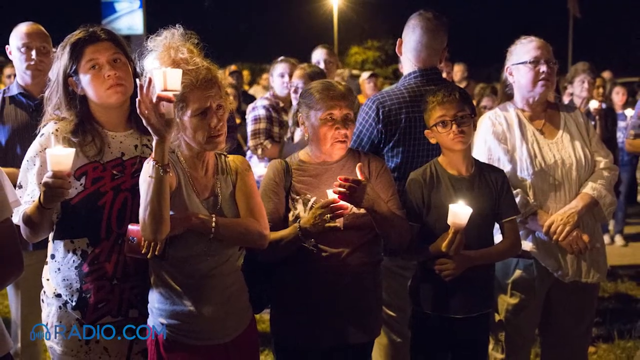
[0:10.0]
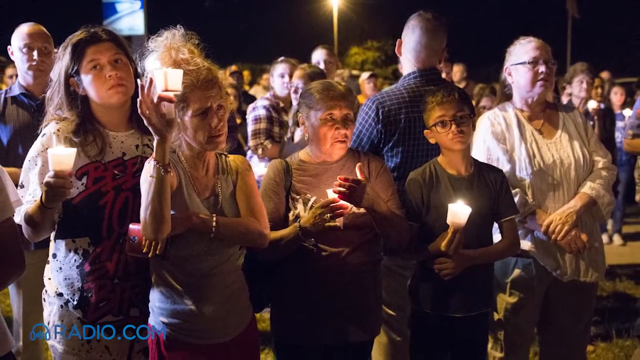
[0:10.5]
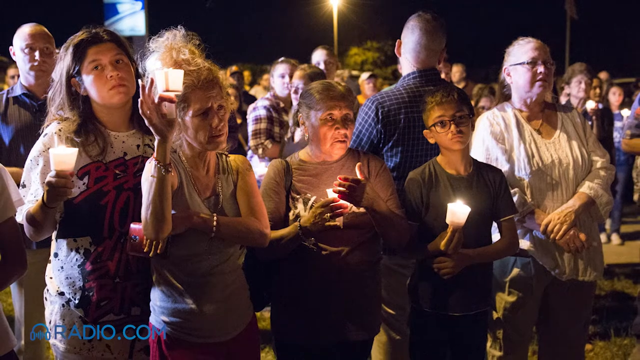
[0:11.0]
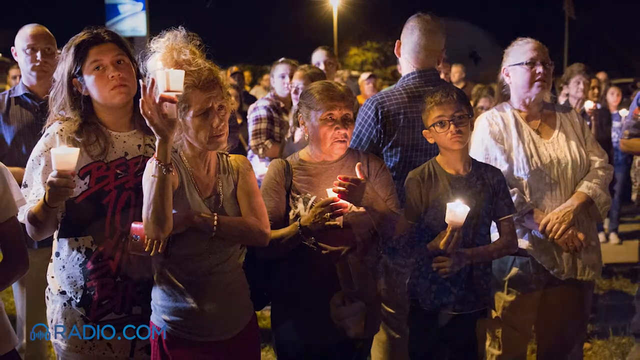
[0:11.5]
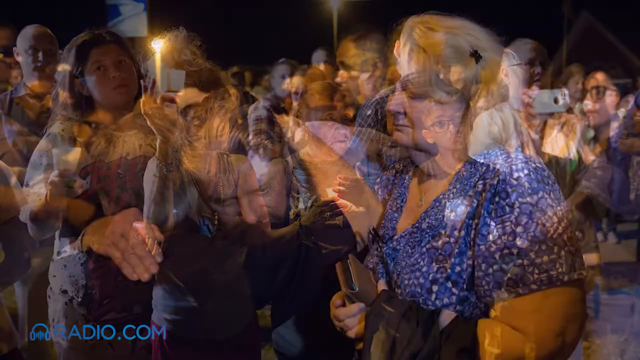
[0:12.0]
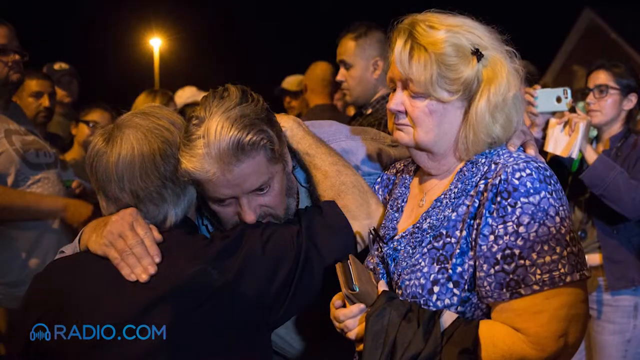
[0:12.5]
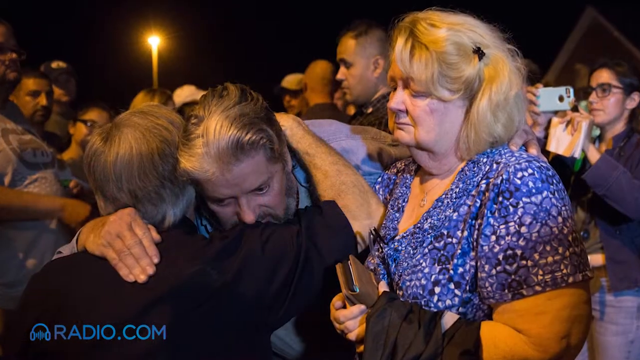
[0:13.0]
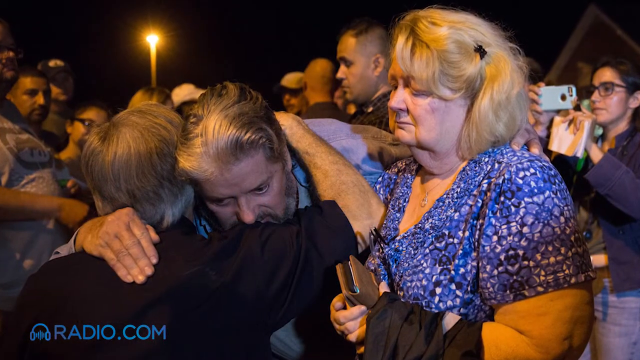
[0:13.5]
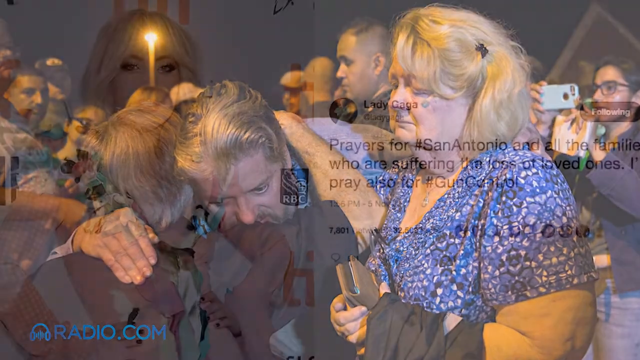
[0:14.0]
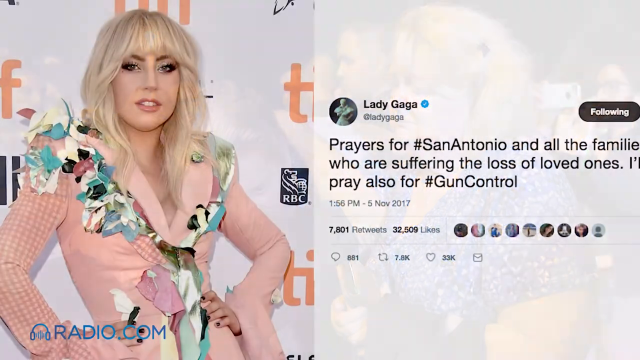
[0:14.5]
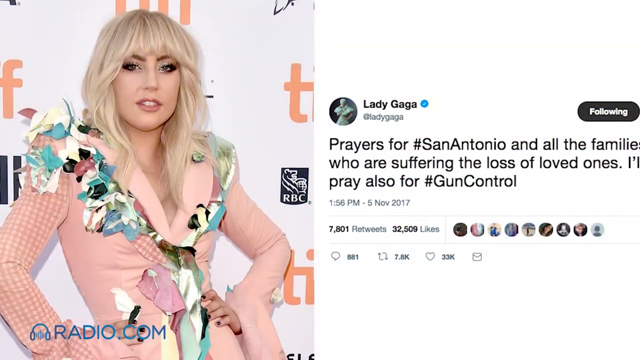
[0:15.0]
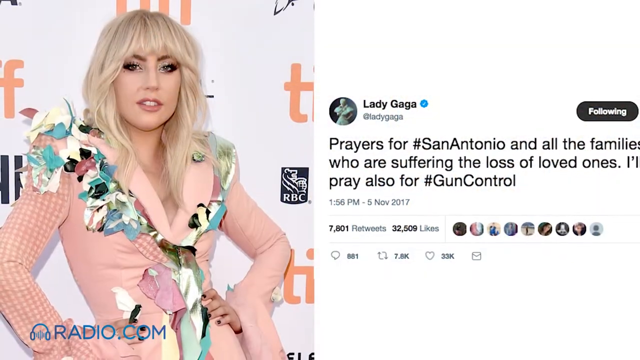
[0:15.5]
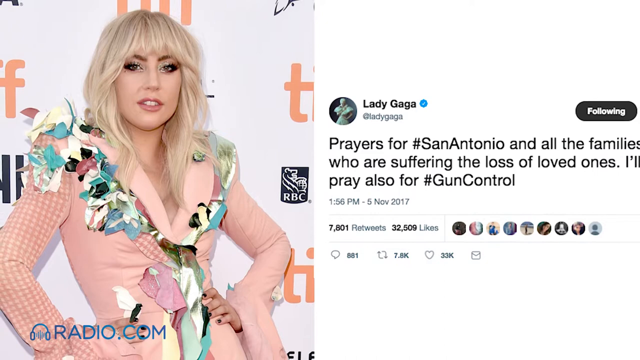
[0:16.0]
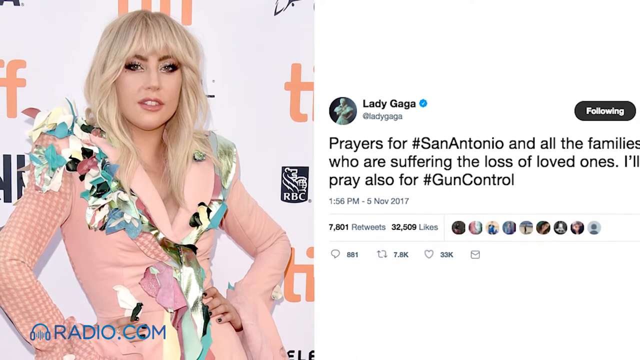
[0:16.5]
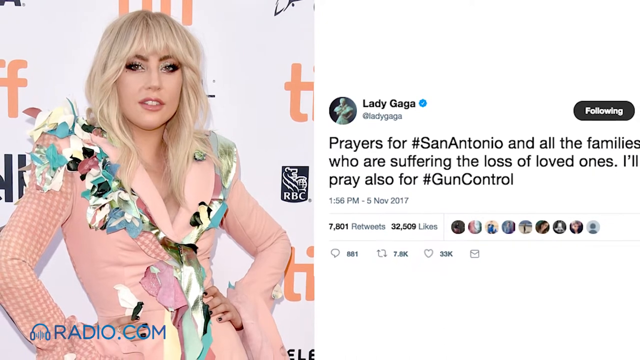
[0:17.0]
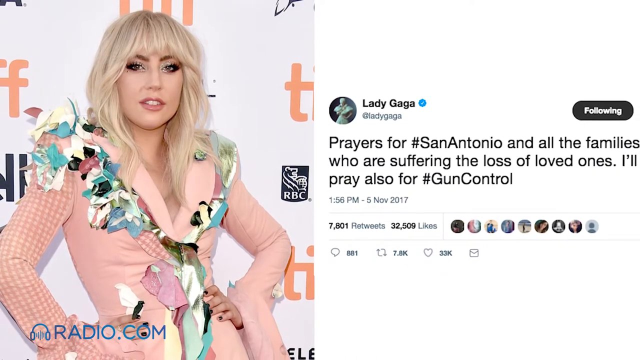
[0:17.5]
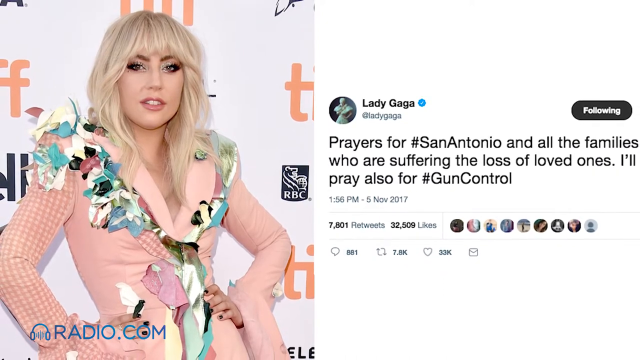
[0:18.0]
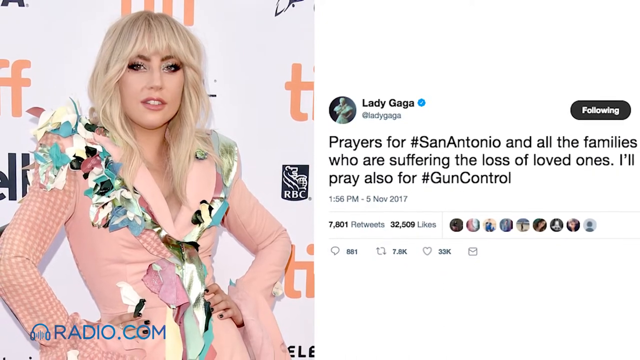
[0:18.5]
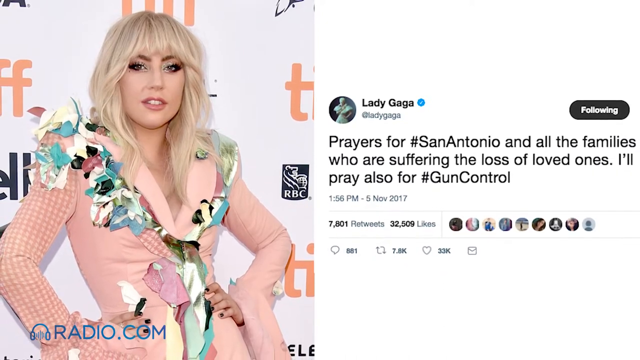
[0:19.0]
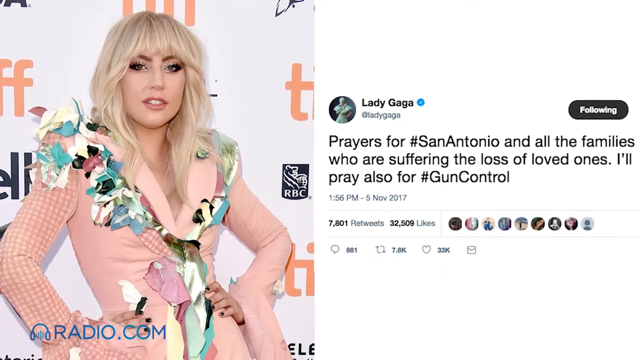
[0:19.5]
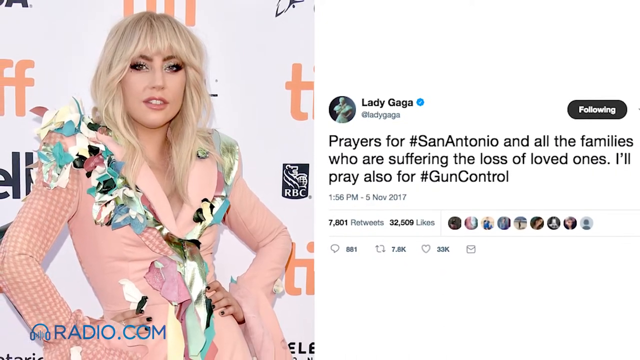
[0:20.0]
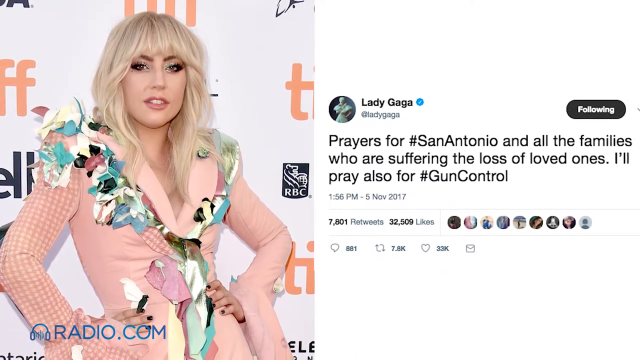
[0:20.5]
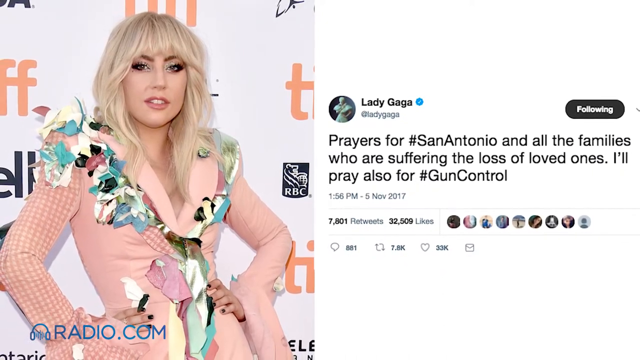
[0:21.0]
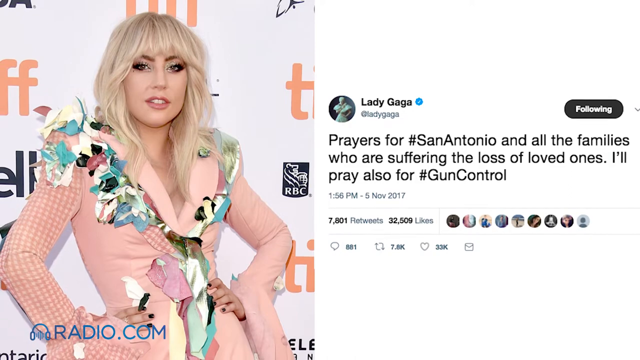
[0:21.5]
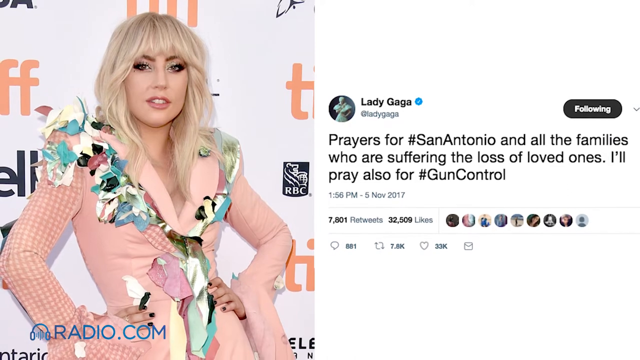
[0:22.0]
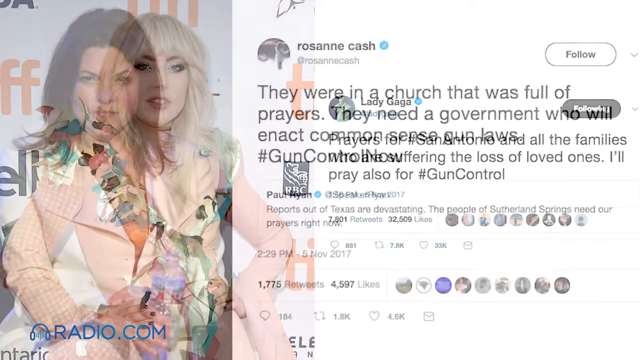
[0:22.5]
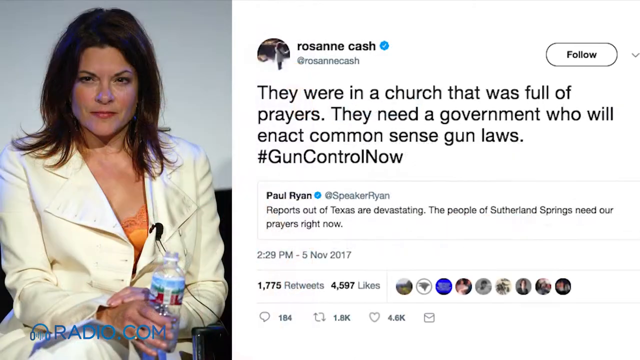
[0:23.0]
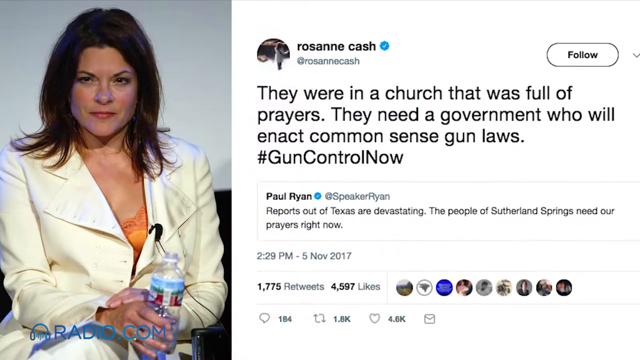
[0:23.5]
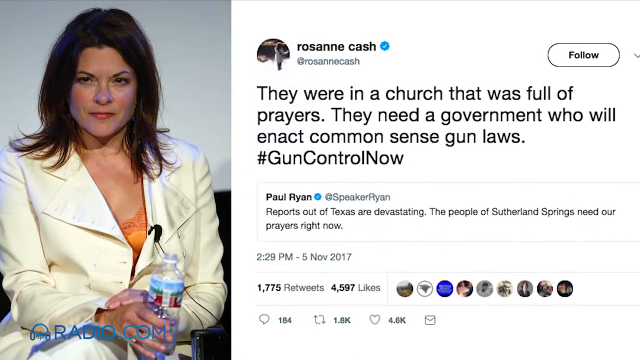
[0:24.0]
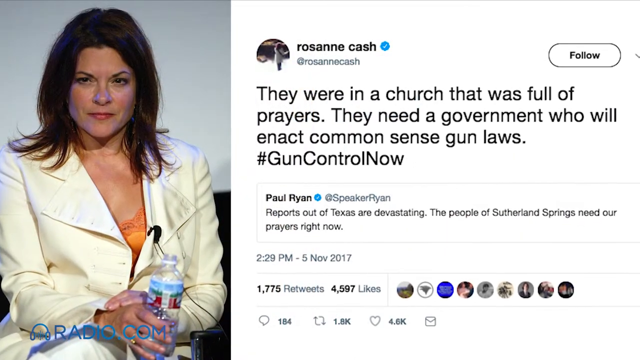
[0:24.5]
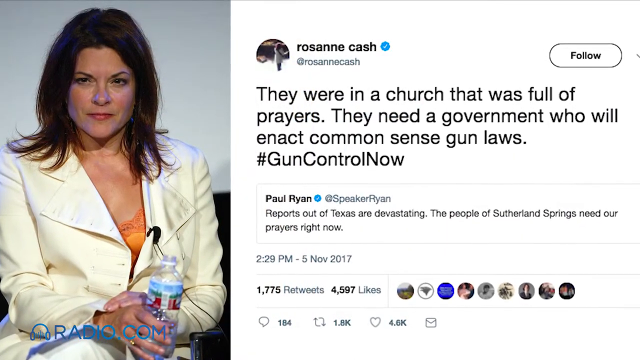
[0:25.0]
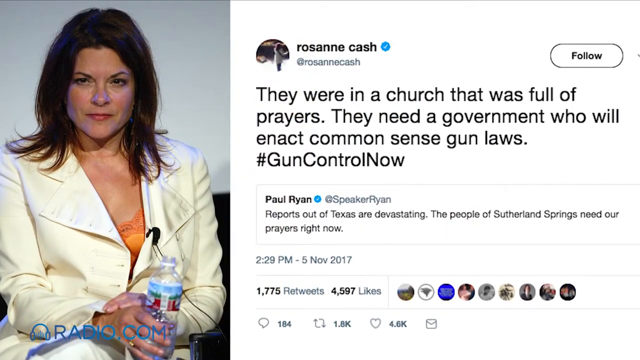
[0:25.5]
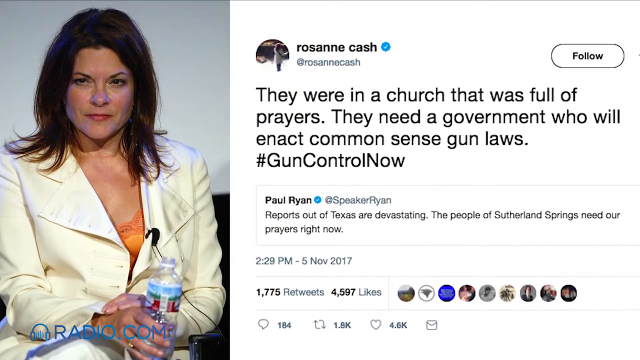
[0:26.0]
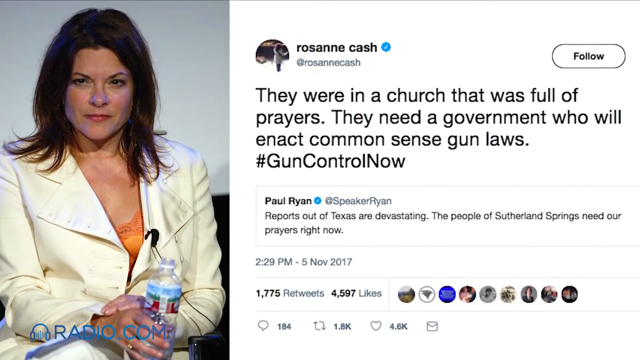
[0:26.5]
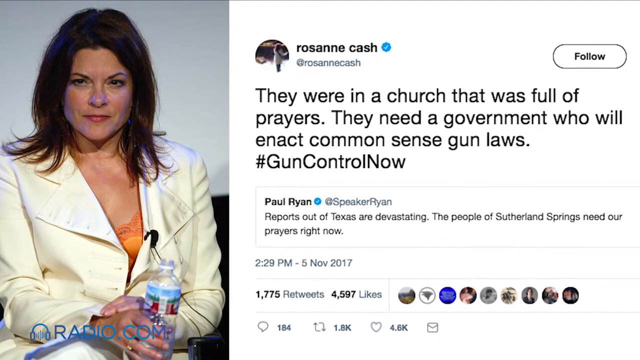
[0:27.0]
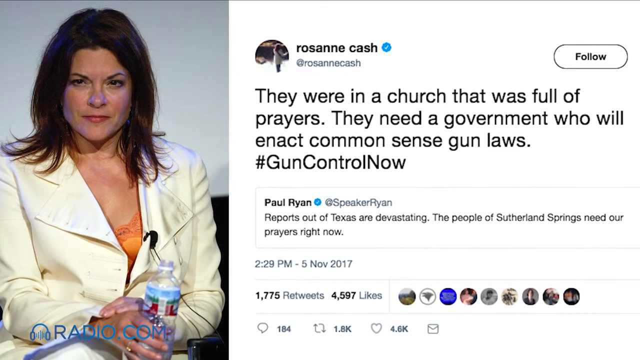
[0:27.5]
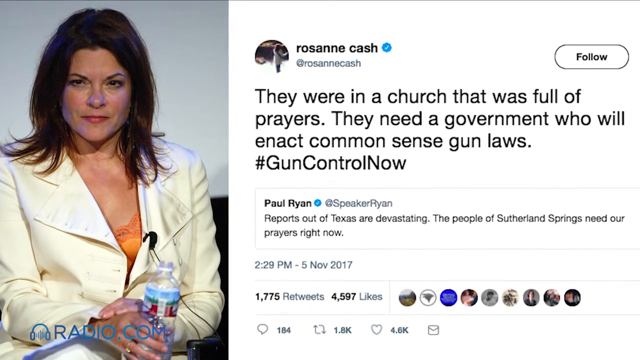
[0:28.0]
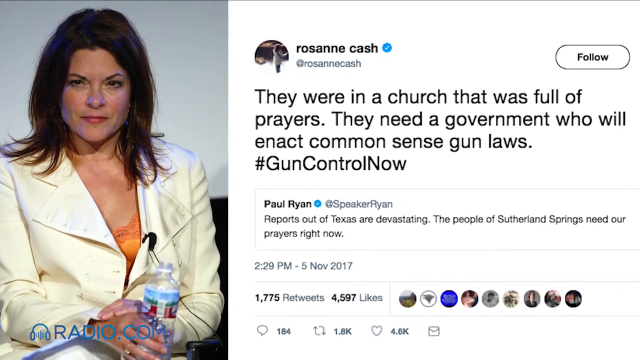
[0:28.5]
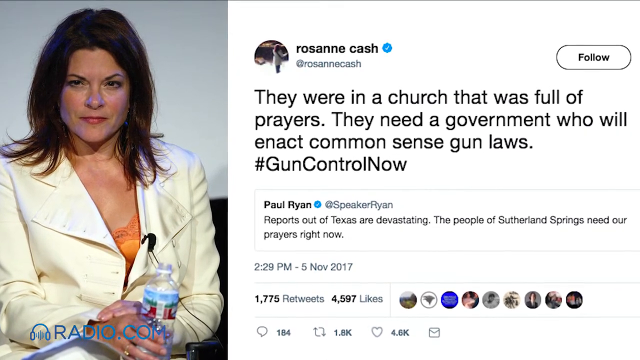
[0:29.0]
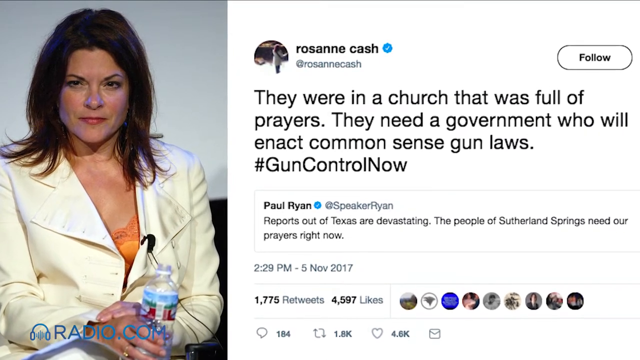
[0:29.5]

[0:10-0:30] A large gathering of people is outside at night, holding candles up; one of them is a child wearing glasses. At the bottom of the screen "radio.com" is written. A man hugs another man, while in the background a woman holds out her phone as if taking a picture or video. In front of the hugging people is a woman with blonde hair in a blue top, holding a wallet. Next comes a tweet from Lady Gaga reading "Prayers for San Antonio and all the families who are suffering the loss of loved ones. I'll also pray for #guncontrol." To the left of the tweet is her picture: she has blonde hair and wears a pink dress with multicolored ruffles. After that comes a tweet from Rosanne Cash reading "They were in a church that was full of prayers, they need a government to enact common sense gun laws #guncontrolnow". To the left of her tweet is her picture: she has long brown hair, wears a white jacket over an orange top, and holds a water bottle.